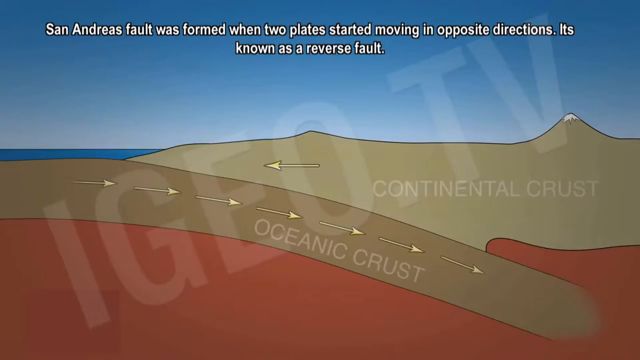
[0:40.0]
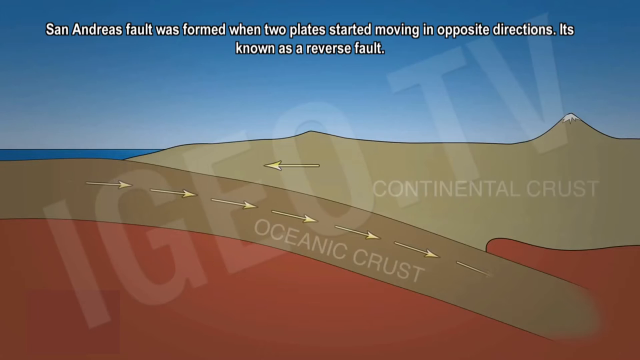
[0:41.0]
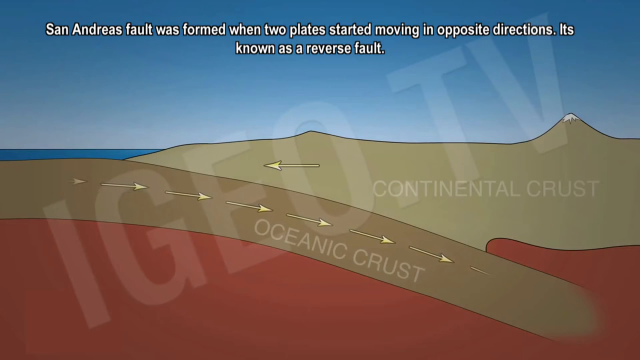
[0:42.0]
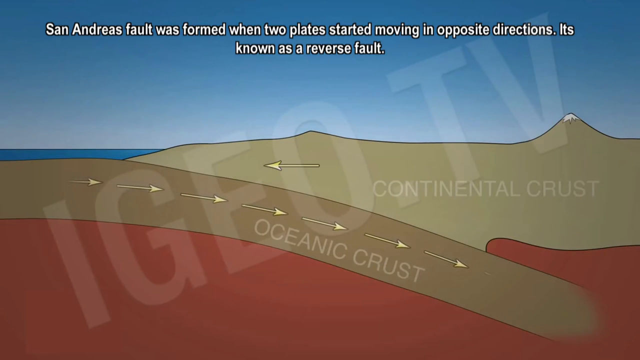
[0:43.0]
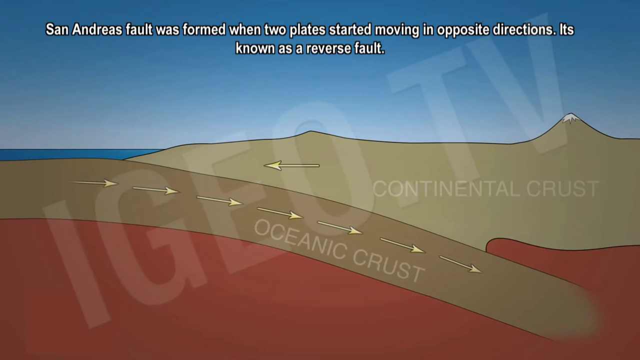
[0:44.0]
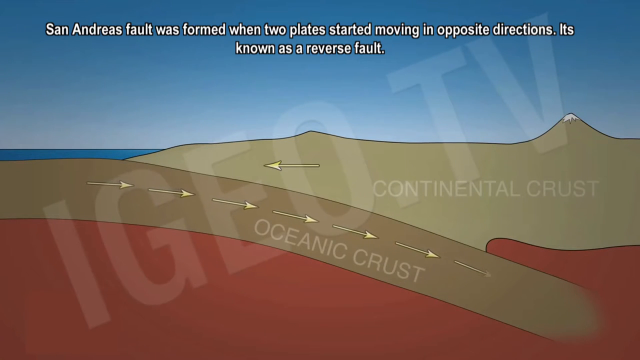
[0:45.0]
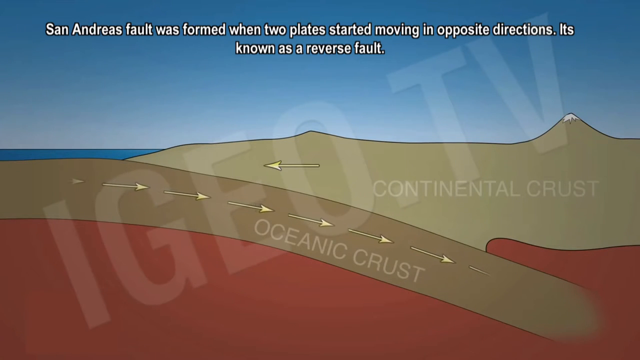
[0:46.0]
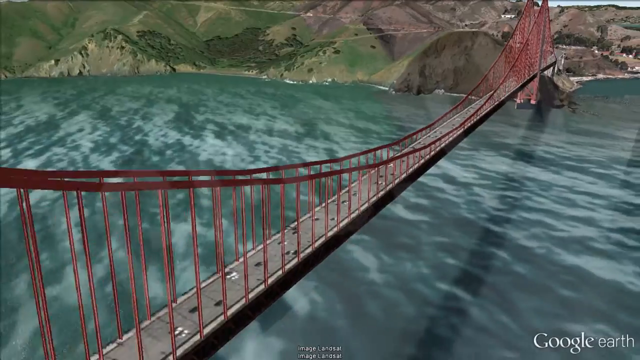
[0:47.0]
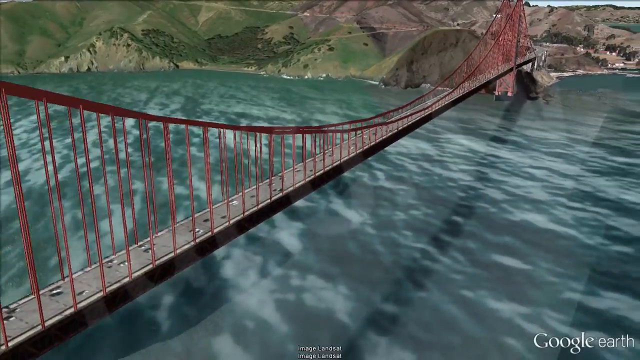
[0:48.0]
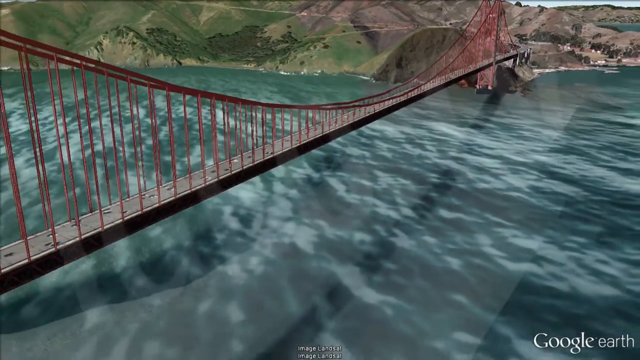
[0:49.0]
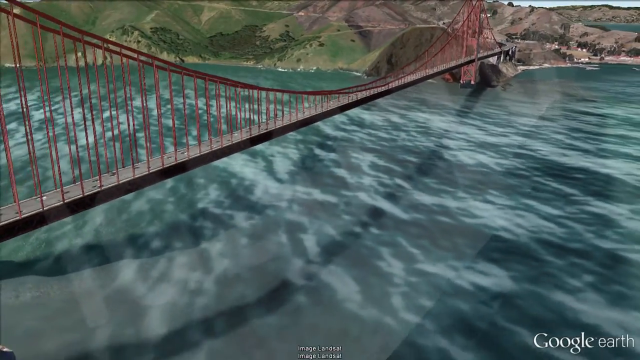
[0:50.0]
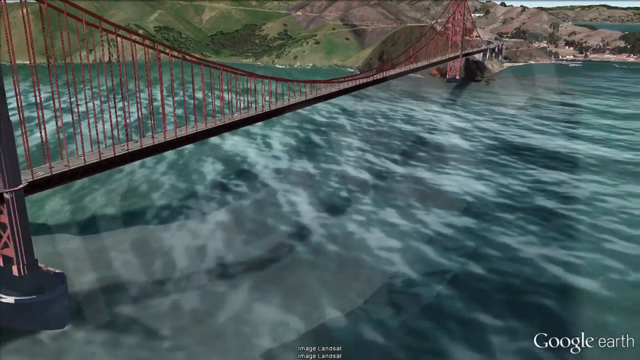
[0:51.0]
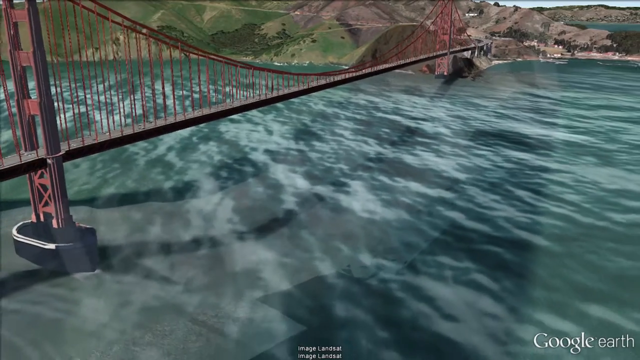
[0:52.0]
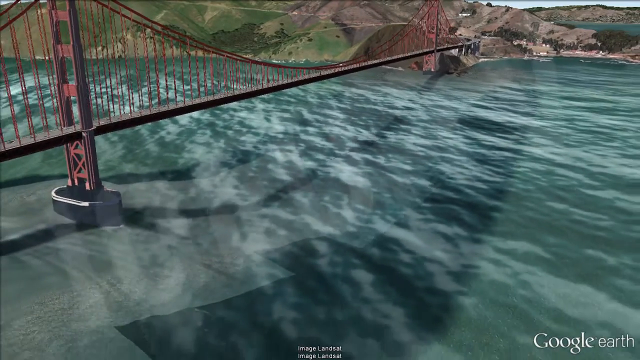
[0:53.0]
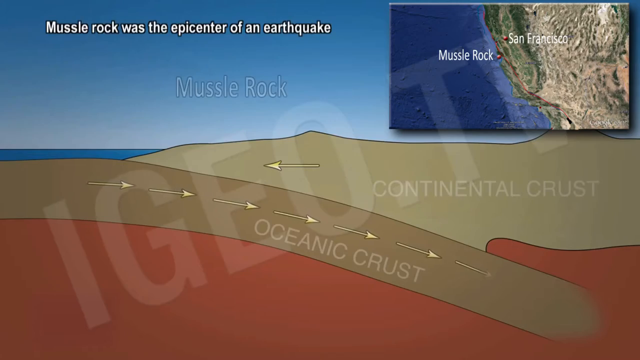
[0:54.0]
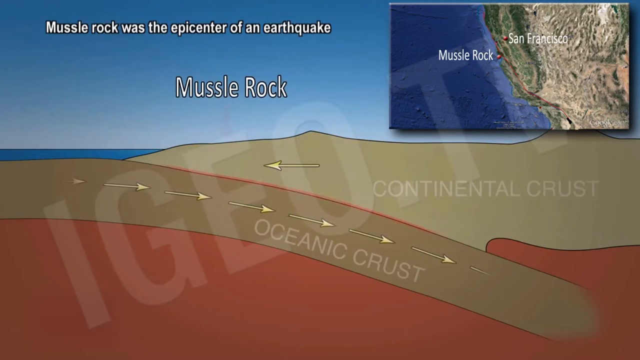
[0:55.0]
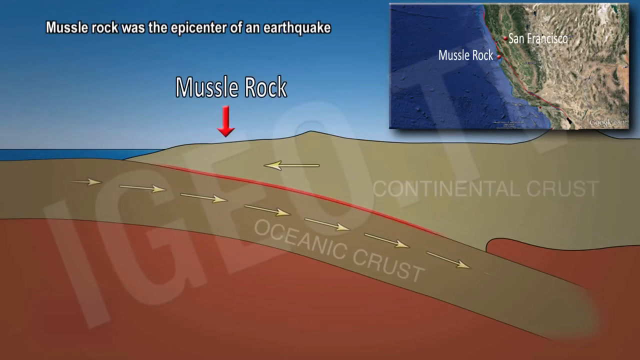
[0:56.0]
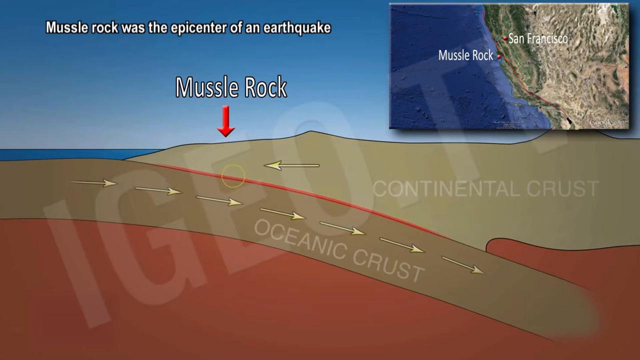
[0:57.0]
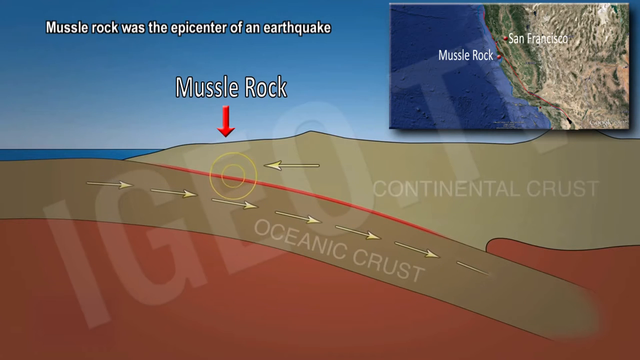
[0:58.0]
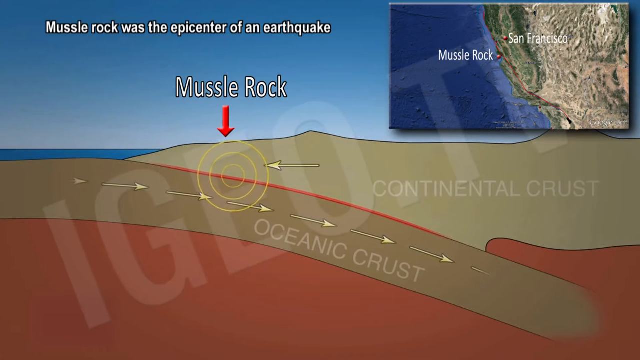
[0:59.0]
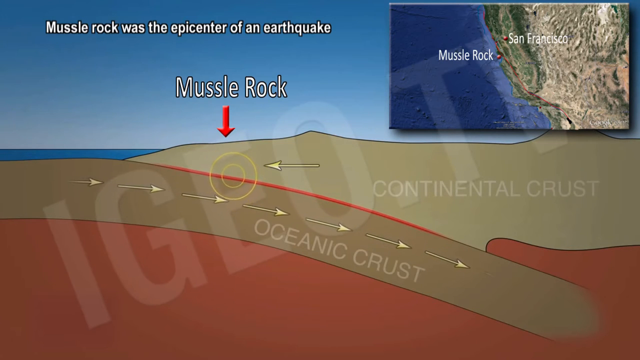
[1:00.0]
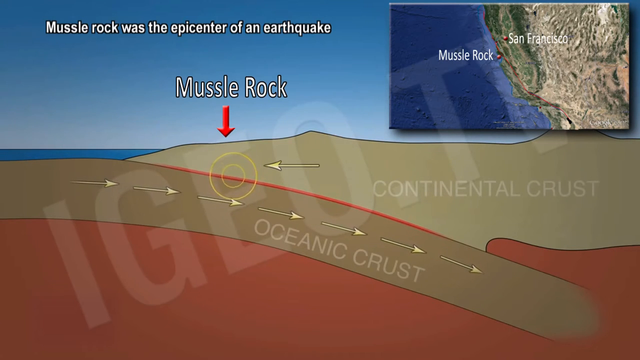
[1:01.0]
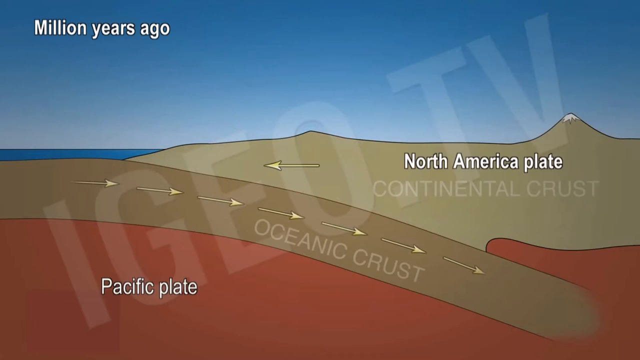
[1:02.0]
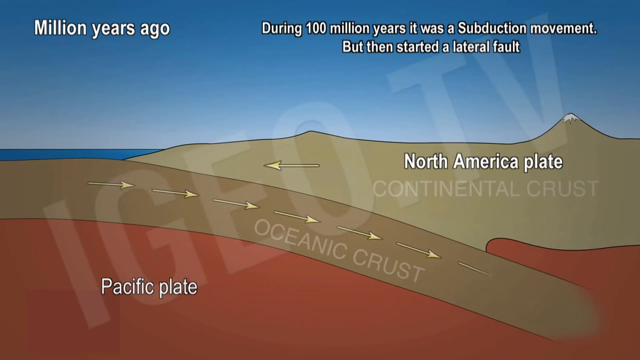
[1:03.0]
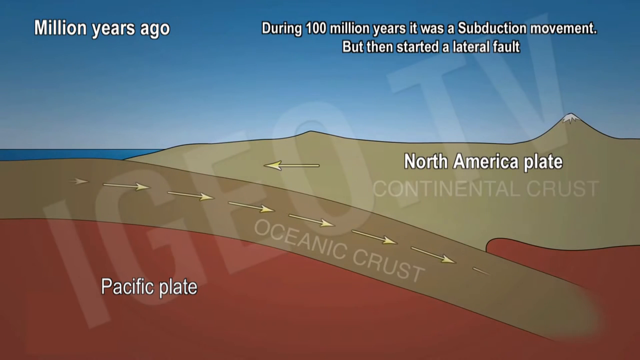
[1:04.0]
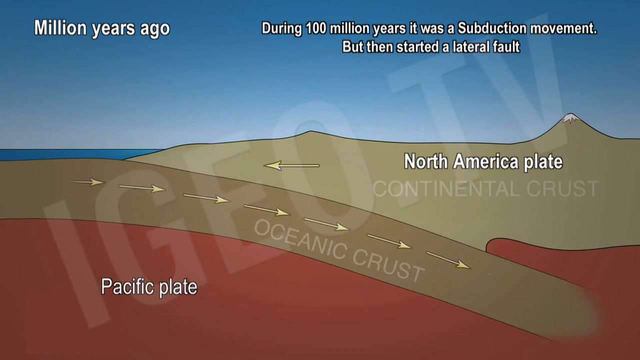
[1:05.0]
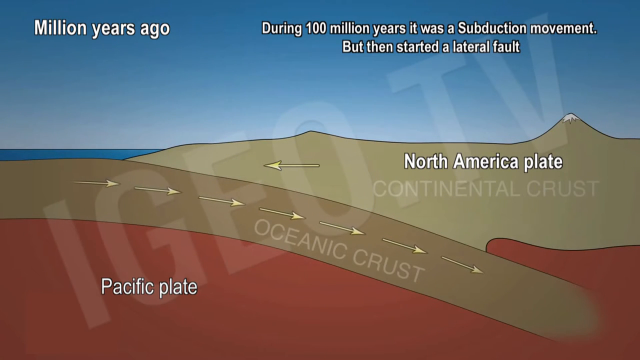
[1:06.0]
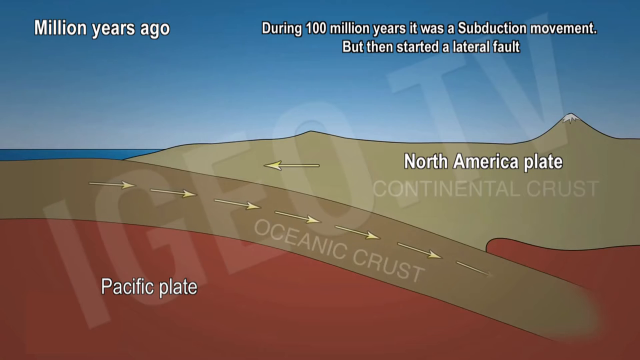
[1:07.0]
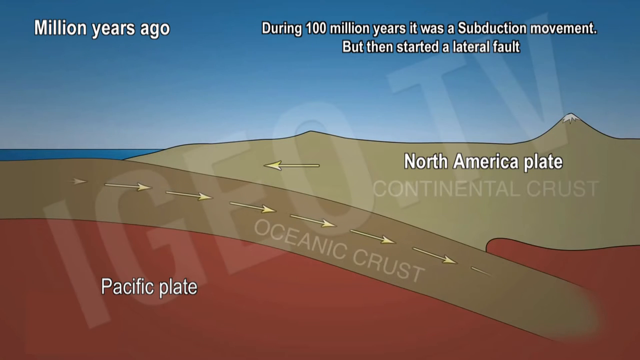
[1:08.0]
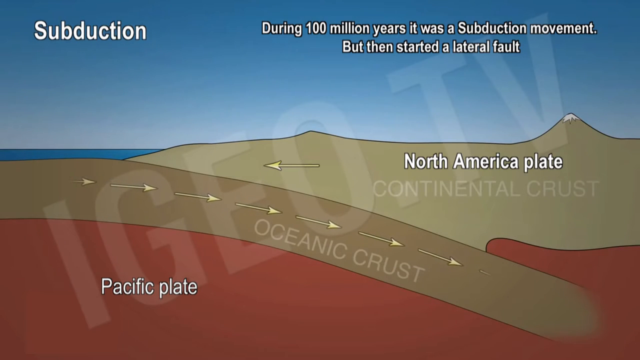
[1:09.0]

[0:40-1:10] Text reads "San Andreas Fault was formed when two plates started moving in opposite directions. It's known as a reverse fault." The oceanic crust is shown going under the continental crust. A computer-generated San Francisco Bridge appears, with Marin and the Bay visible. The view returns to the same graphic of the oceanic crust going under the continental crust, and it shows where a place called Muscle Rock is, with text saying "Muscle Rock was the epicenter of an earthquake." It is close to San Francisco but looks like it might be more toward Monterey. A red arrow marks Muscle Rock, with the text "million years ago" and "During 100 million years it was a subduction movement, but then started a lateral fault." The same graphic with the Pacific plate and the North American plate stays on screen.